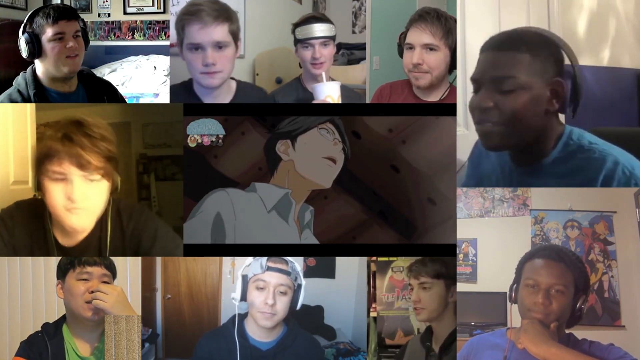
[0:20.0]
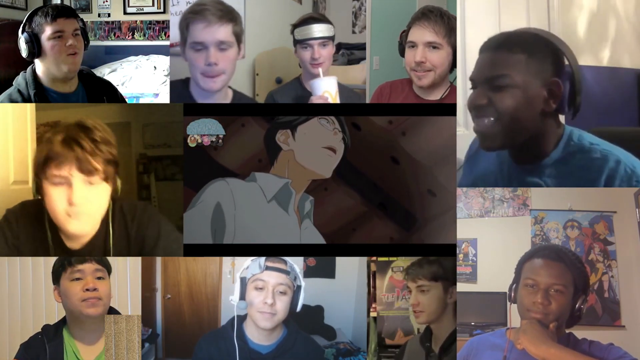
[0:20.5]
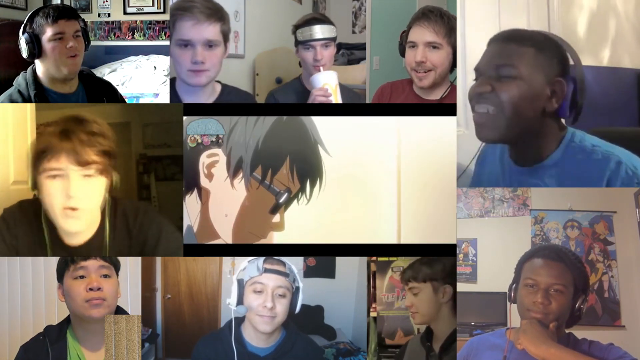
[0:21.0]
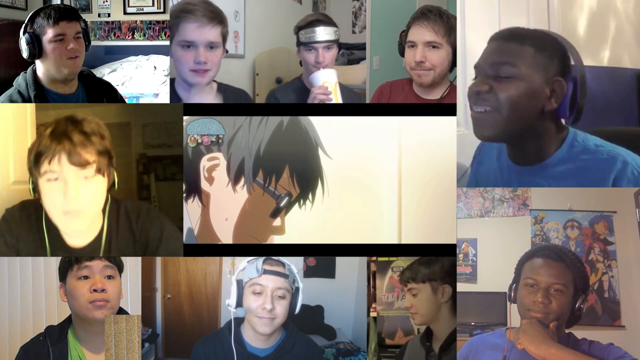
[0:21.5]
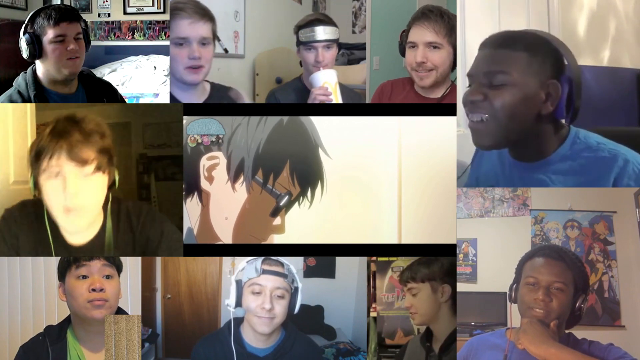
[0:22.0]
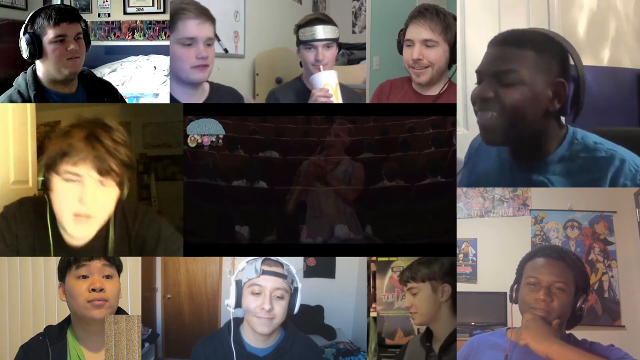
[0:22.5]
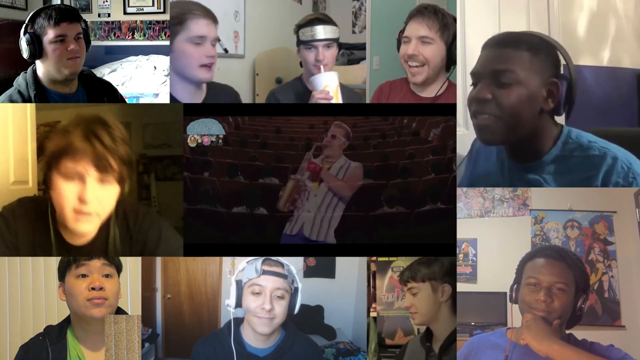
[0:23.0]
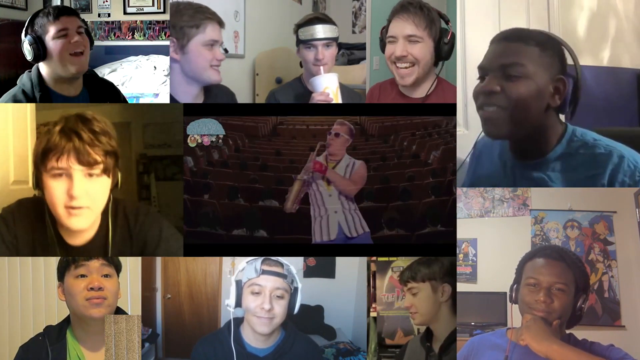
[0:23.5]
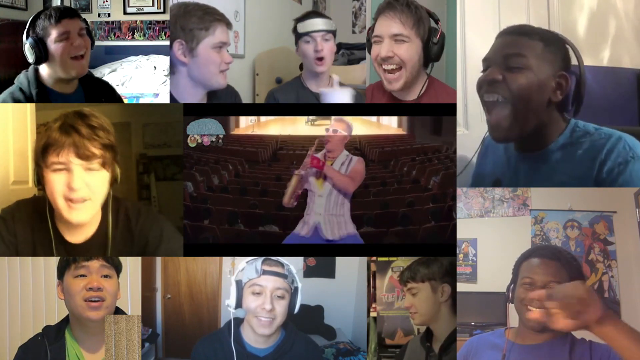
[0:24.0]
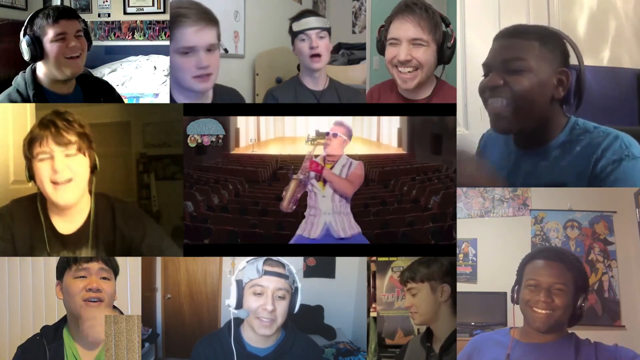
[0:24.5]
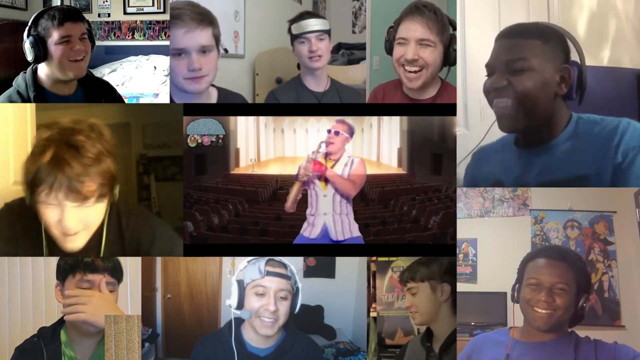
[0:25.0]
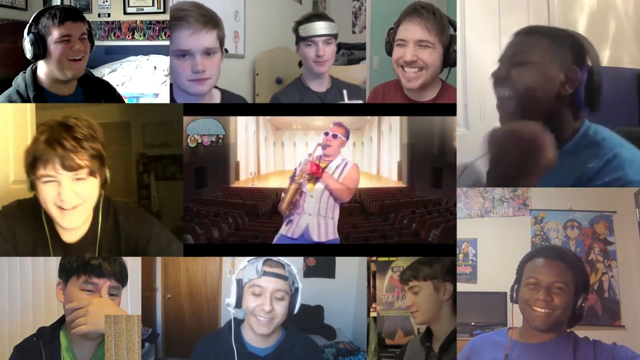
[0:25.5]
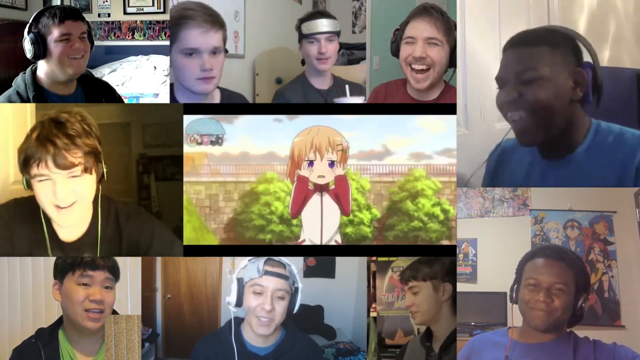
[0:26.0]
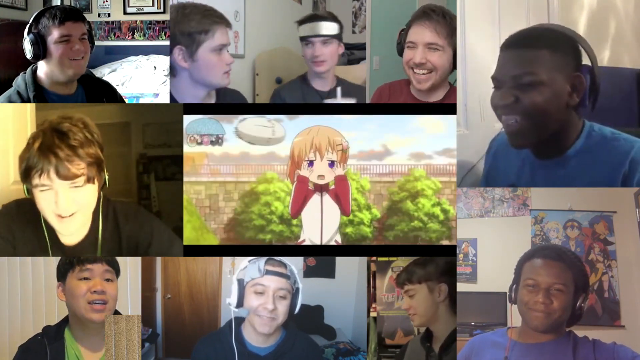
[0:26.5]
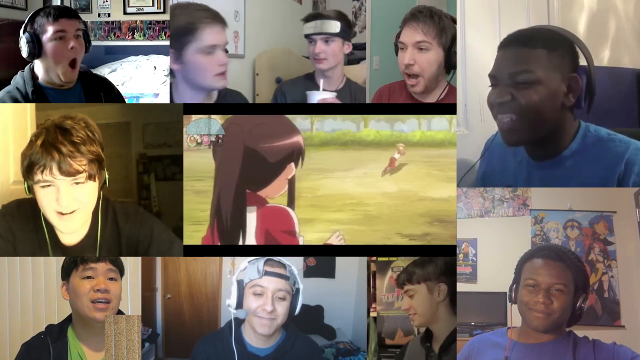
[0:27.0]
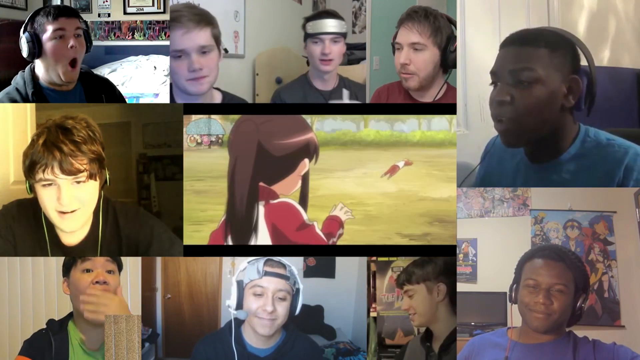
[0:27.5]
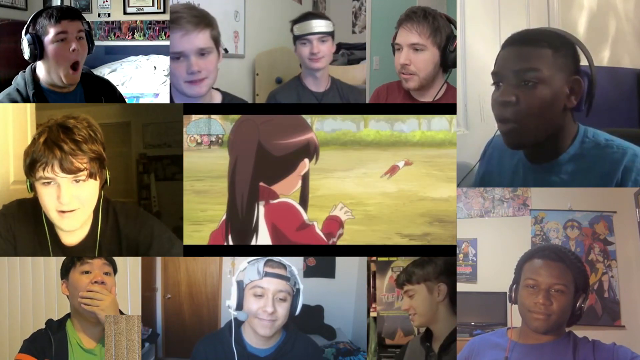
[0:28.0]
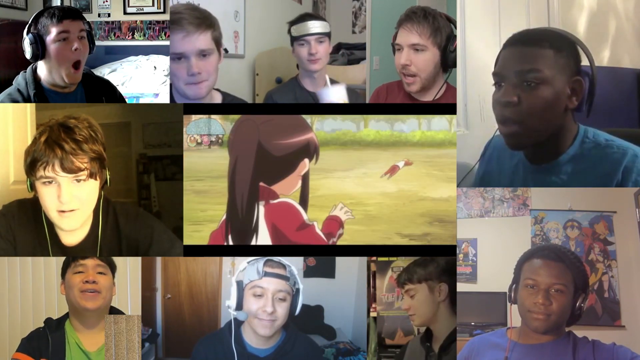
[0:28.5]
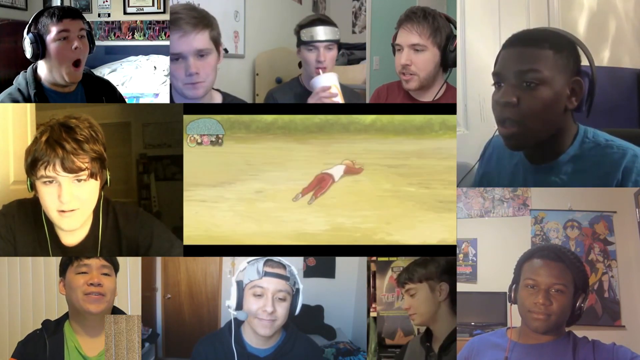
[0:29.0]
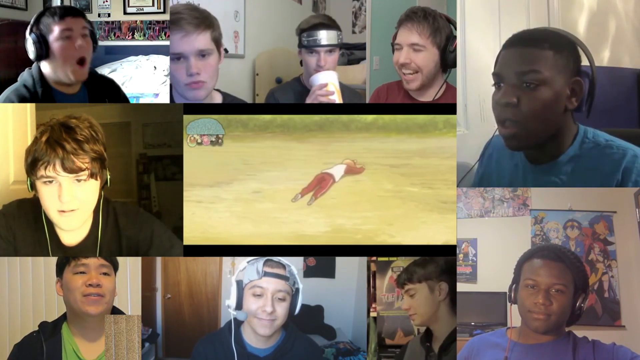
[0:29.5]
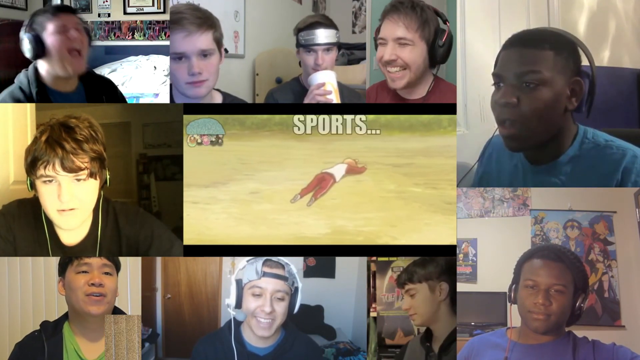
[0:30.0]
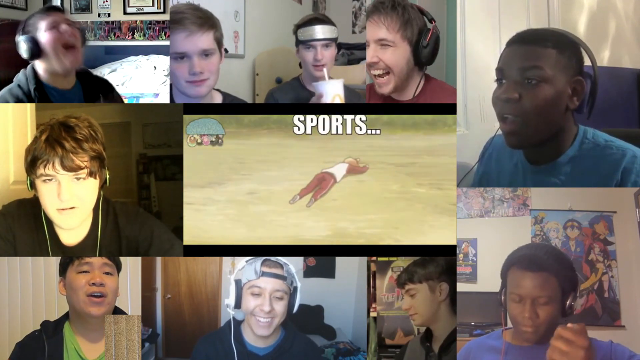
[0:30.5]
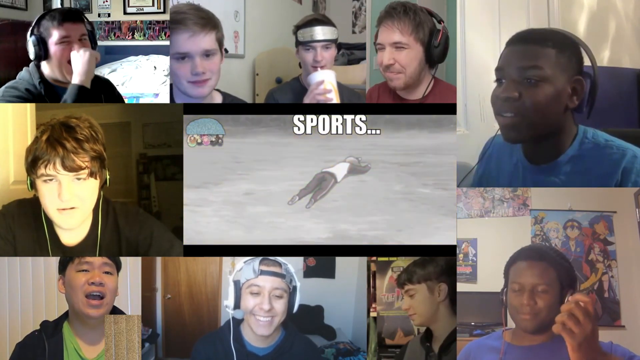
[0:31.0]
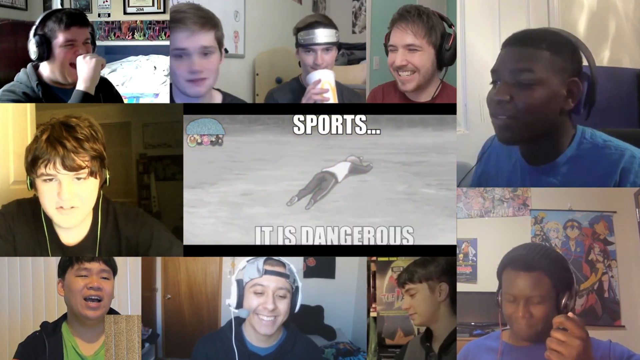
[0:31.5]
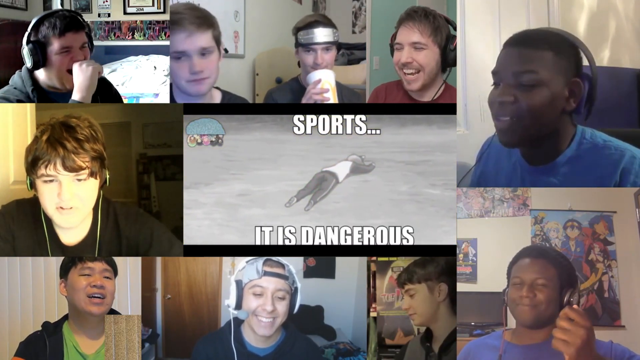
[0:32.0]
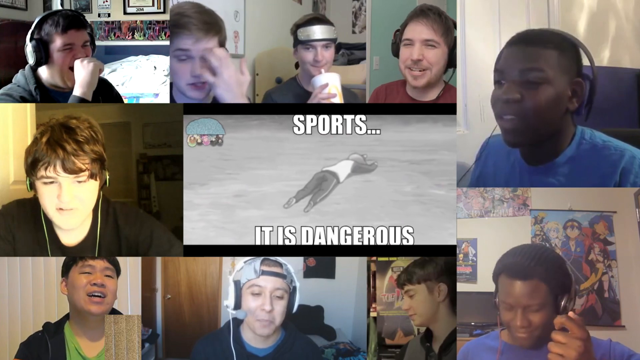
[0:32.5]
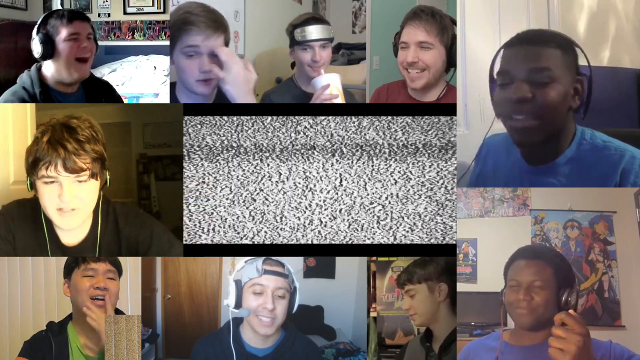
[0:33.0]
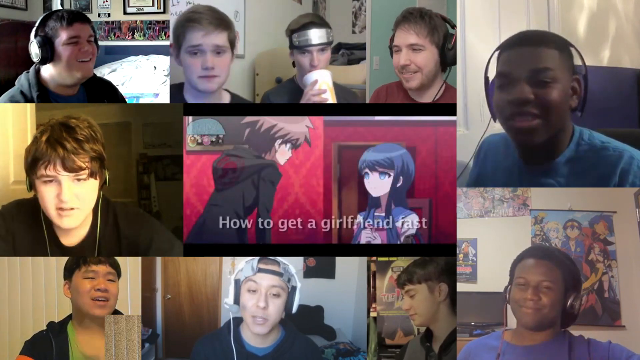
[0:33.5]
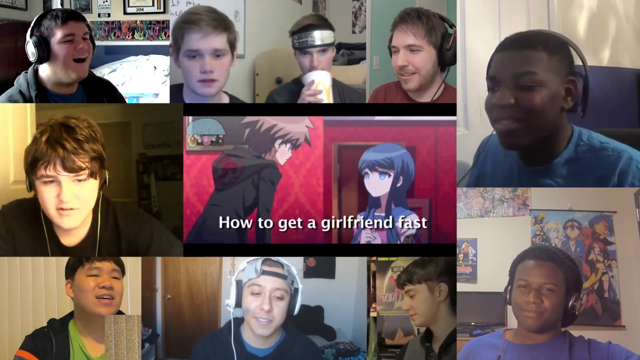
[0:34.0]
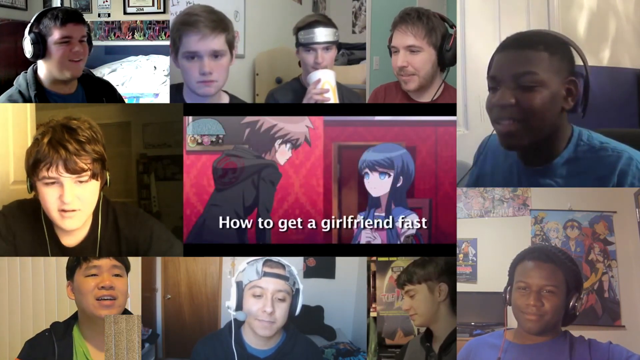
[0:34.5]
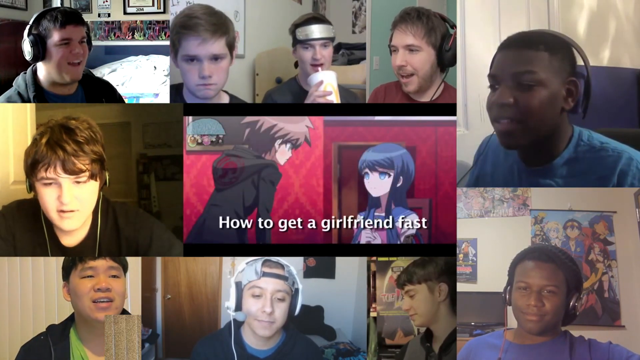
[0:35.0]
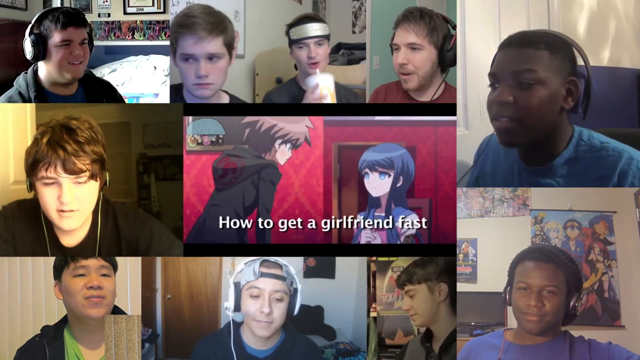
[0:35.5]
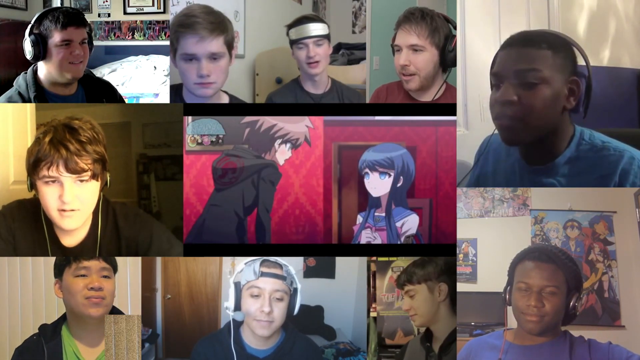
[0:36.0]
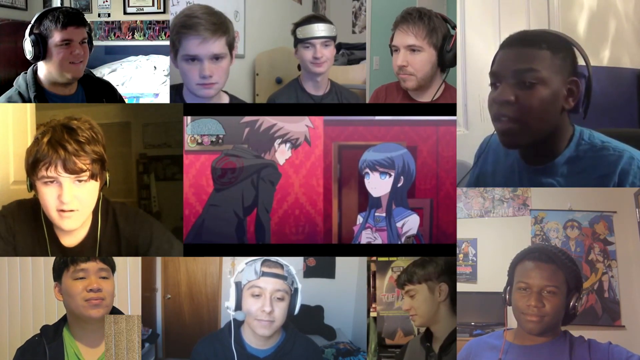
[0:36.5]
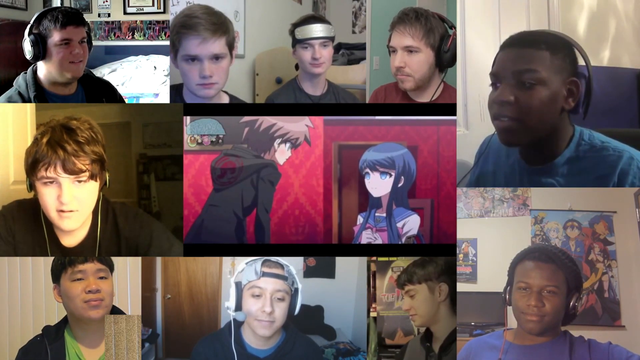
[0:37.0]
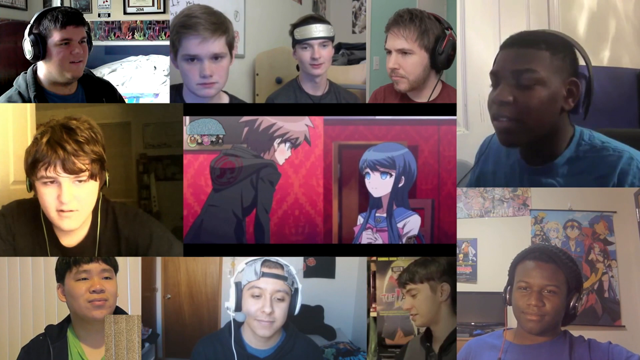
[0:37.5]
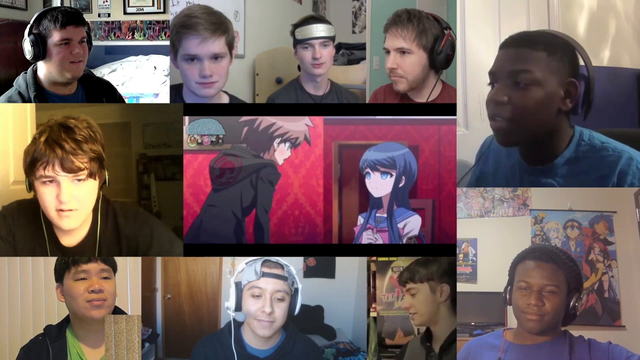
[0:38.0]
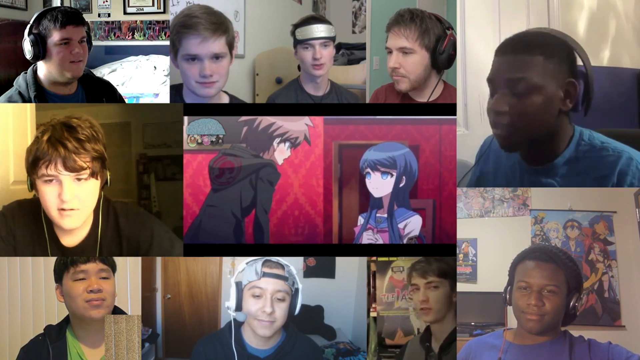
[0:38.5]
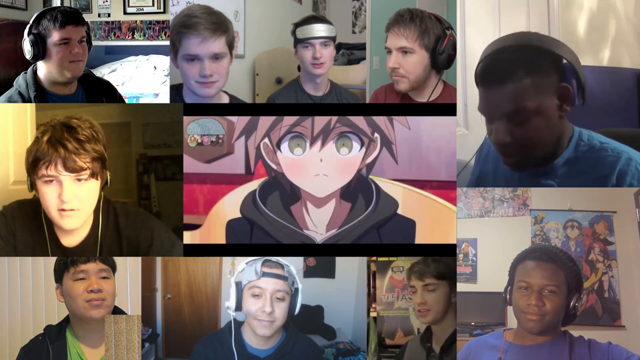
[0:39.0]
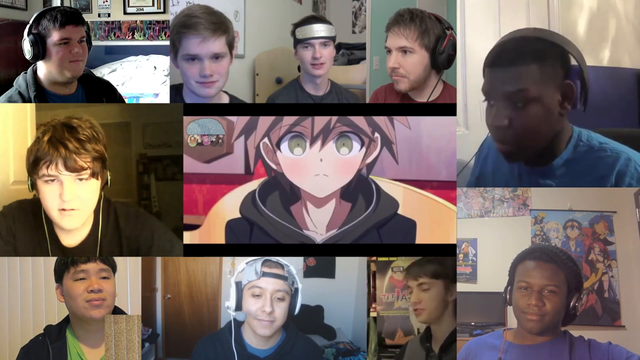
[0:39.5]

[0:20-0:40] A collage of people who look like they are on webcam surrounds an animation in the center. A man has black hair, glasses and a light blue shirt. The boy on the left is kind of jamming his head, and a black boy at the top right is kind of acting goofy as well. Another guy drinks from a McDonald's cup and kind of just focuses on the video. A man acting goofy in the center of the video plays an instrument, and all the people laugh at it. An anime character that looks like a young girl gets hit in the head by something, and the guys all kind of look shocked and react. She is then lying on the ground with text that says "sports"; the image kind of grays out with additional text that says "it is dangerous". Text then reads "how to get a girlfriend fast" with two animated characters on screen, who are talking, followed by a close-up of one of them.